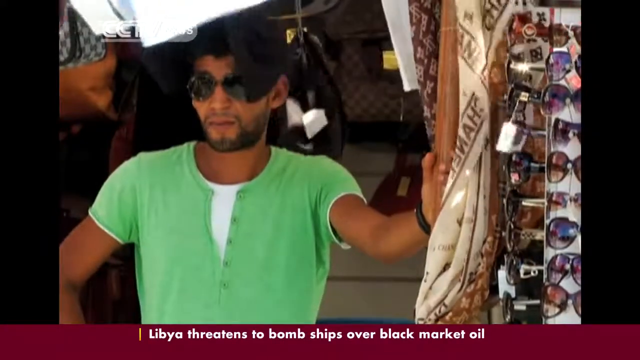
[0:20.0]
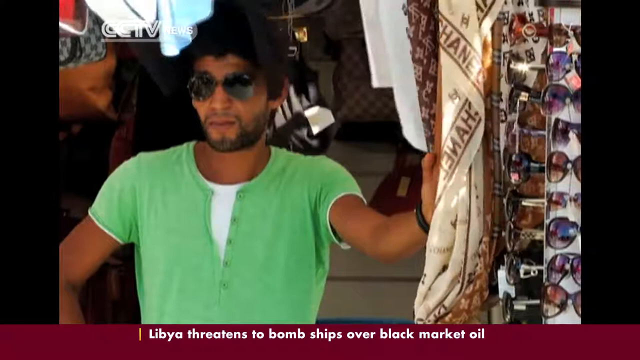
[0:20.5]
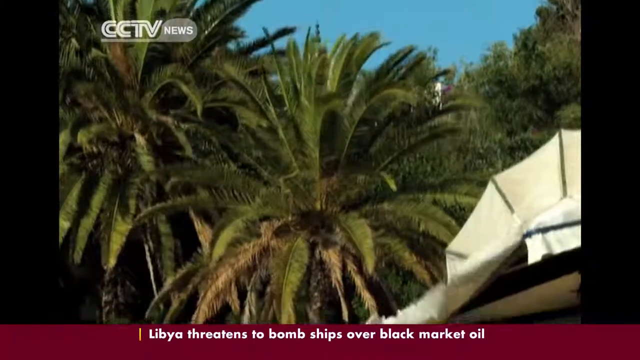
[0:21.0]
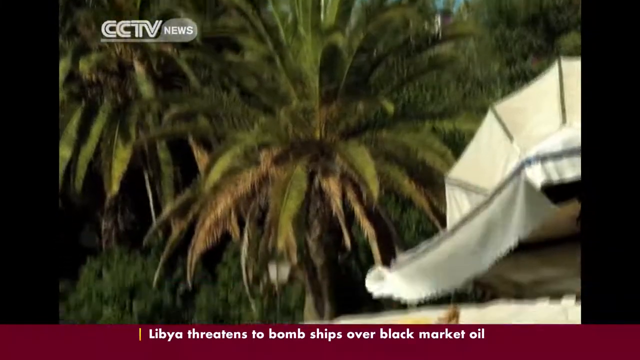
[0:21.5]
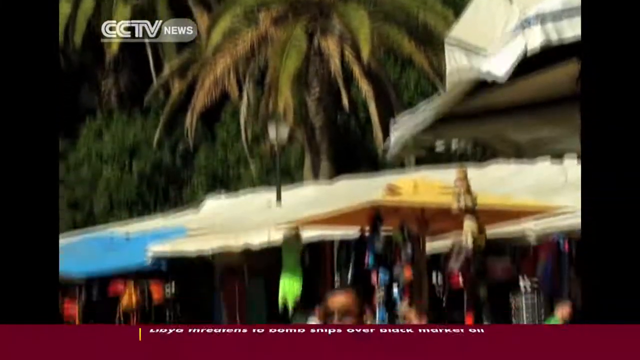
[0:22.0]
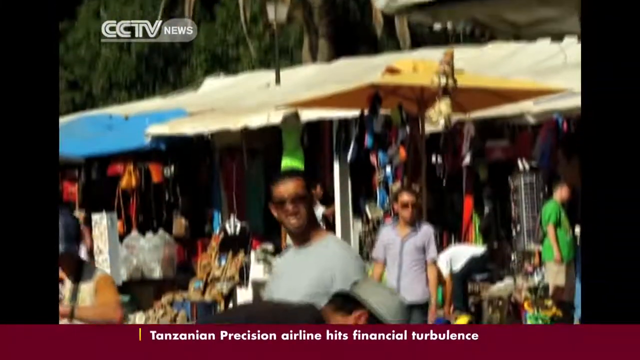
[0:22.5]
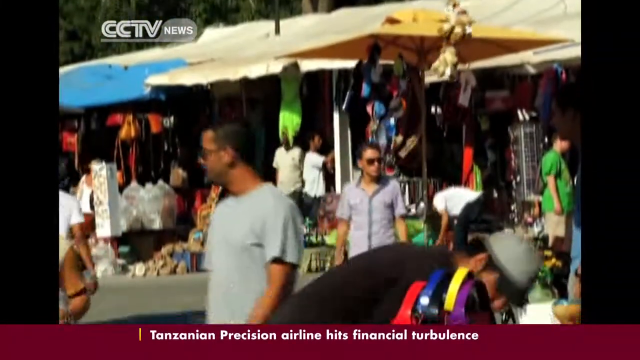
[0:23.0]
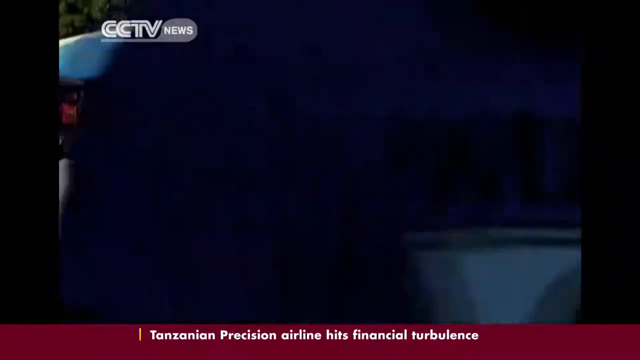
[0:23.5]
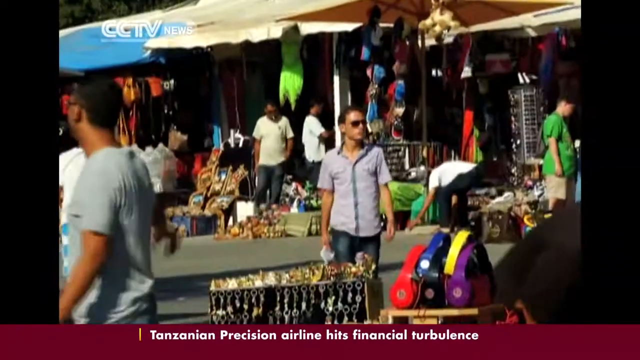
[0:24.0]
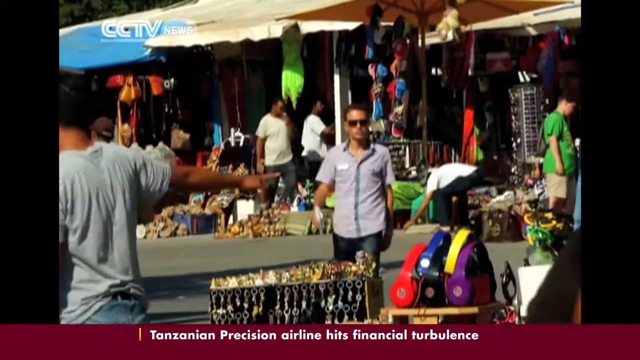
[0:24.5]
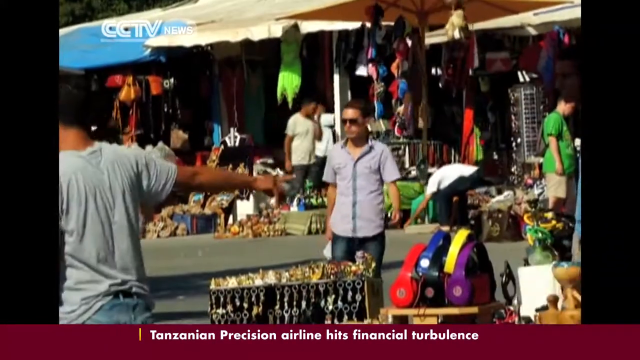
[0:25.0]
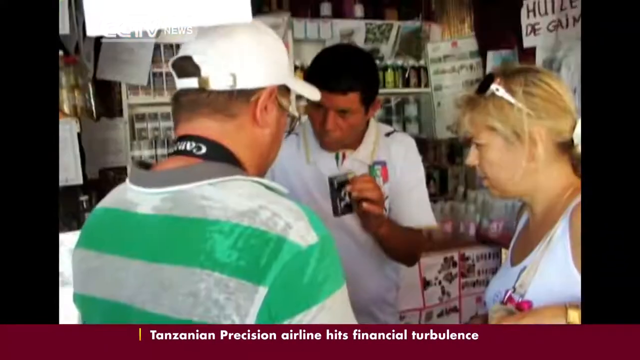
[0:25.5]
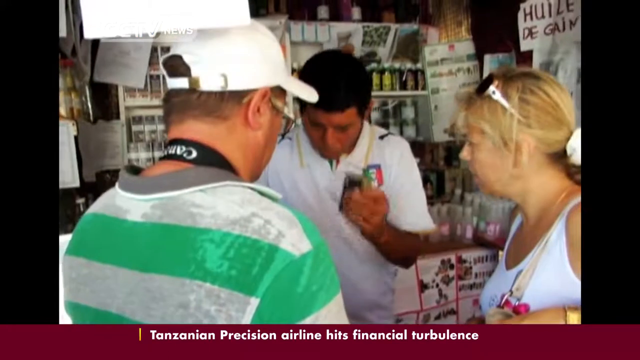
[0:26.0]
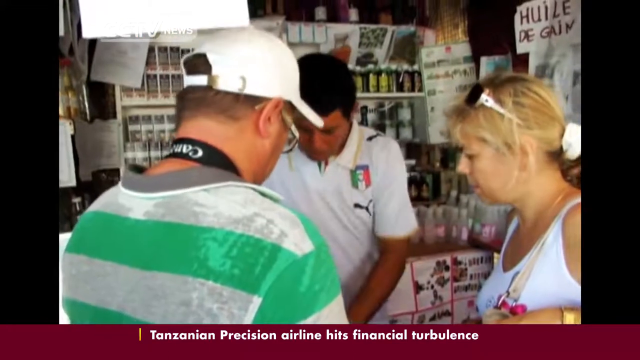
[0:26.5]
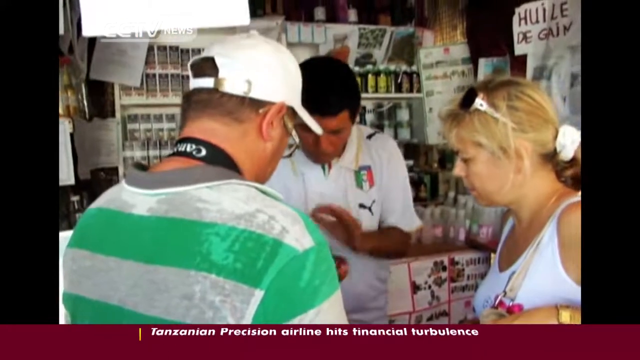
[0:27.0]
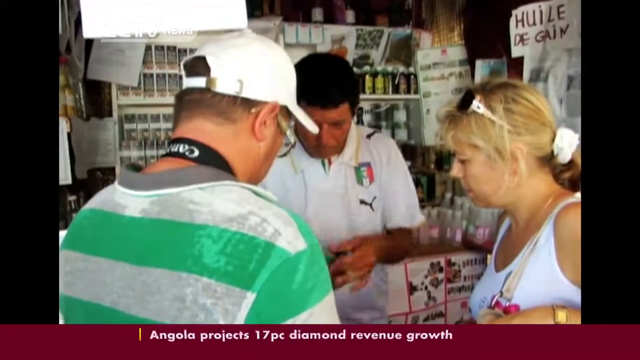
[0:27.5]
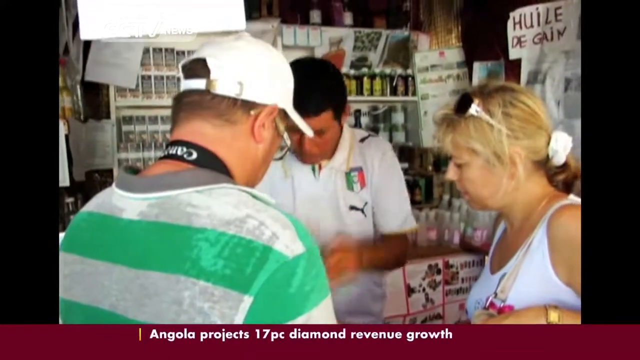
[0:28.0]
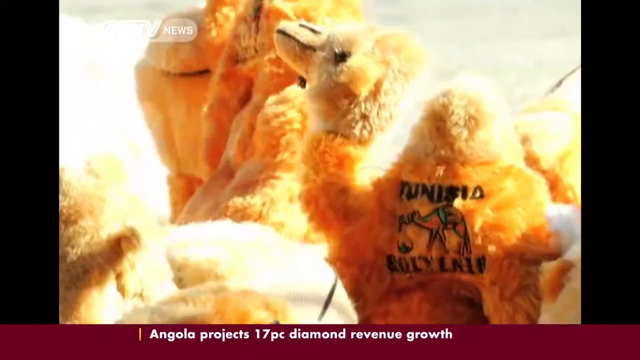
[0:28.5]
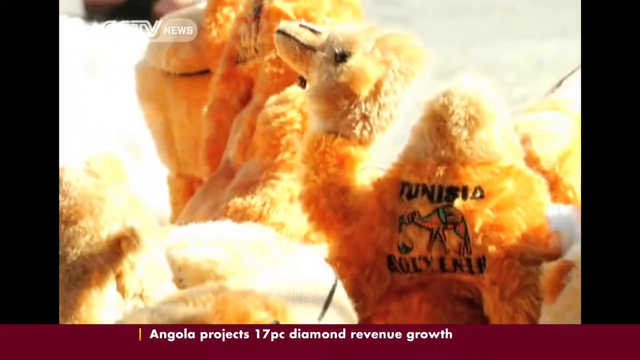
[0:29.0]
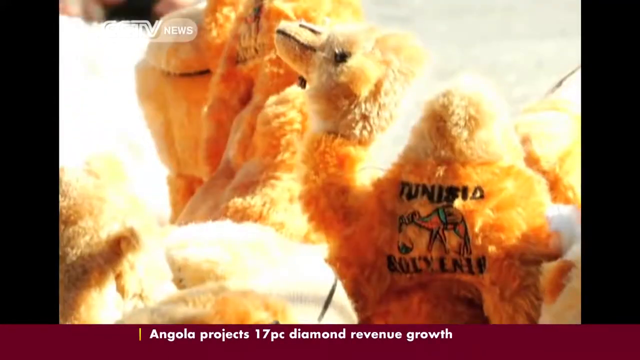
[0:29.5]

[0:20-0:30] What appears to be a vendor at one of the market stalls, wearing a green shirt and sunglasses, stands next to a revolving sunglass display with other items behind him that look like handbags, possibly counterfeit knockoffs for tourists. The wind blows the fronds of a palm tree against a bright blue sky on a sunny day. The camera pans down to more tourists walking around the marketplace, which has many different stalls selling things. A white couple, apparently tourists judging by what they are wearing, talk to a local vendor who goes over the prices of products they are looking to pick up; he holds a bottle and discusses it with them. A close-up then shows a cuddly camel toy with the word "Tunisia" embroidered on its side.